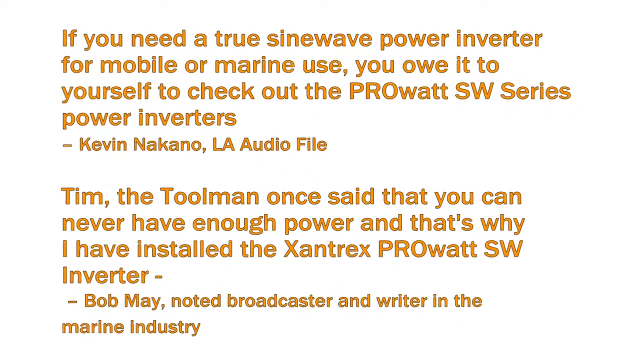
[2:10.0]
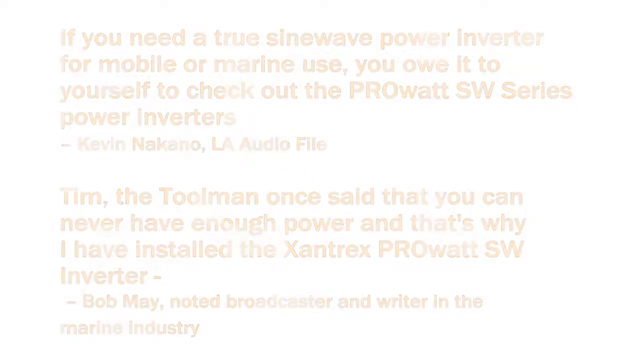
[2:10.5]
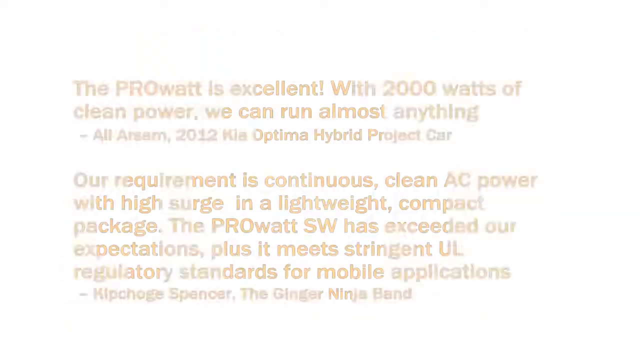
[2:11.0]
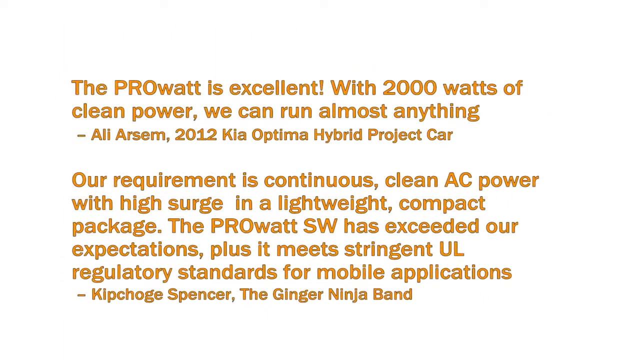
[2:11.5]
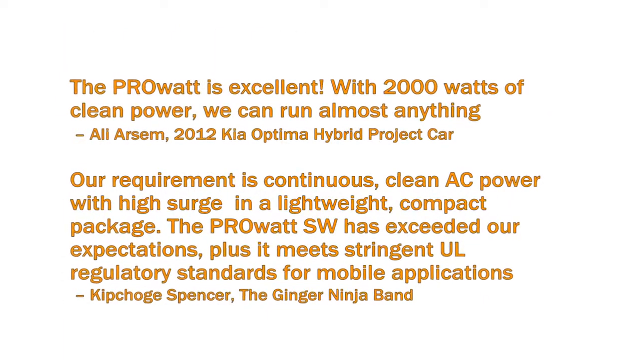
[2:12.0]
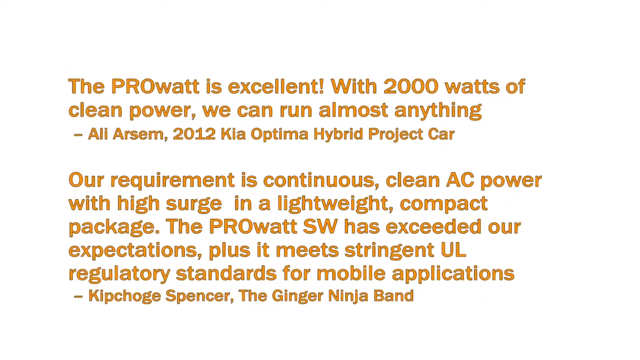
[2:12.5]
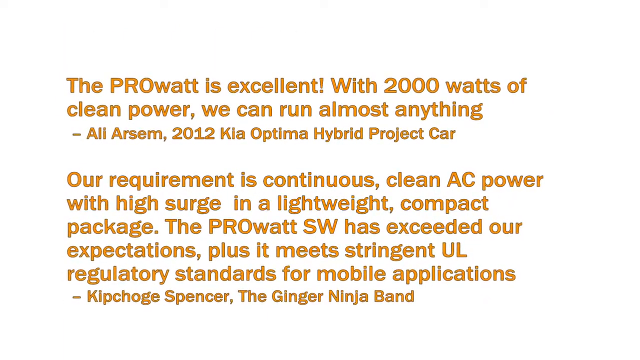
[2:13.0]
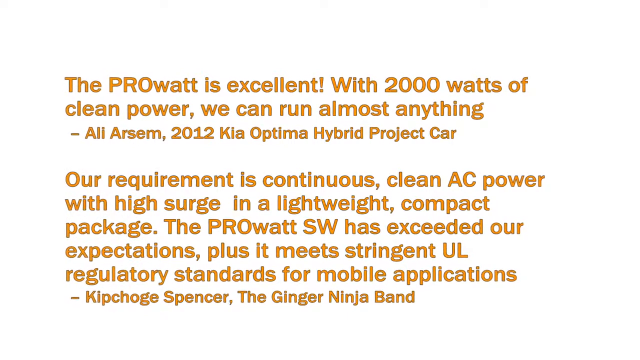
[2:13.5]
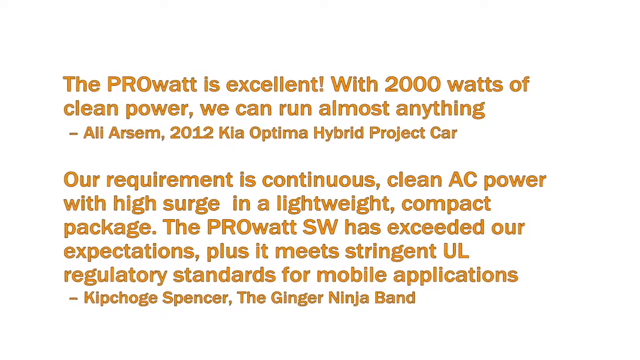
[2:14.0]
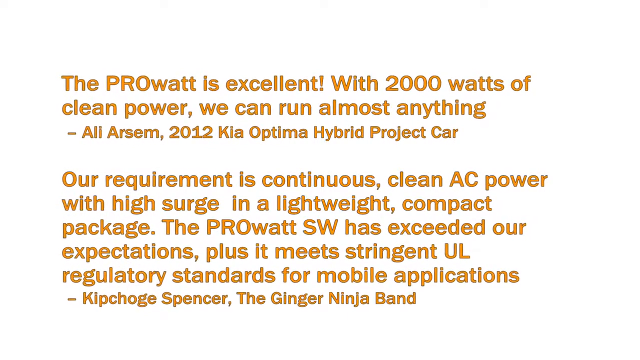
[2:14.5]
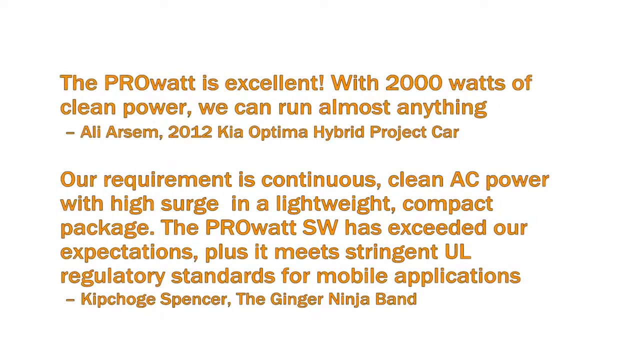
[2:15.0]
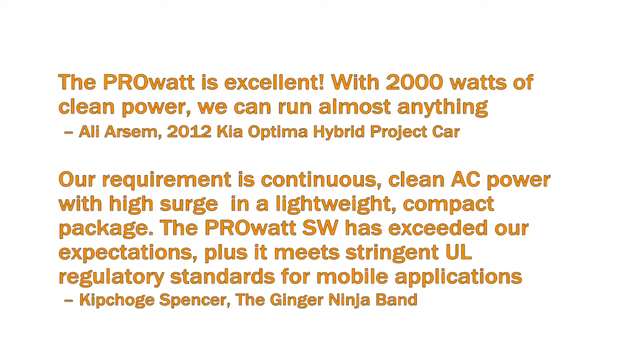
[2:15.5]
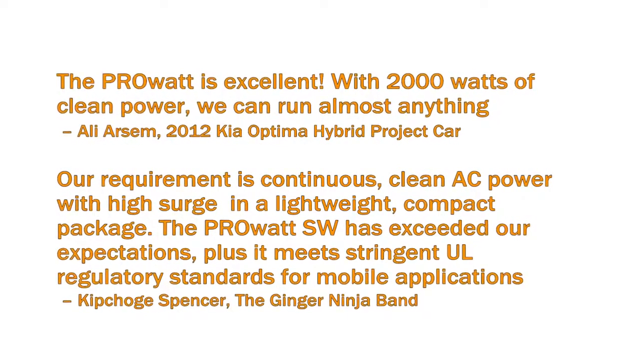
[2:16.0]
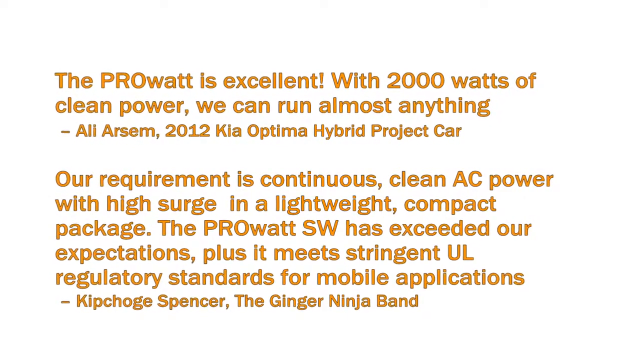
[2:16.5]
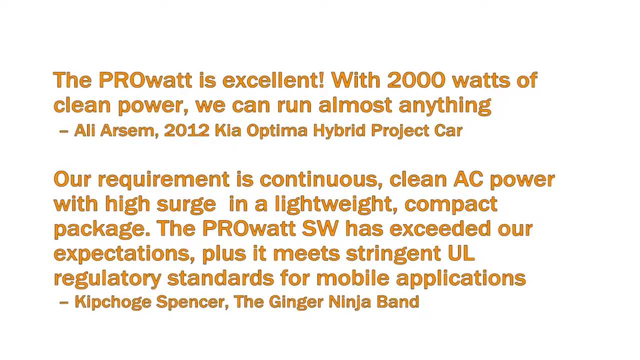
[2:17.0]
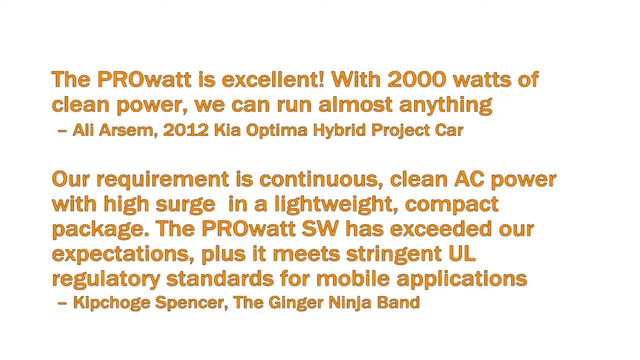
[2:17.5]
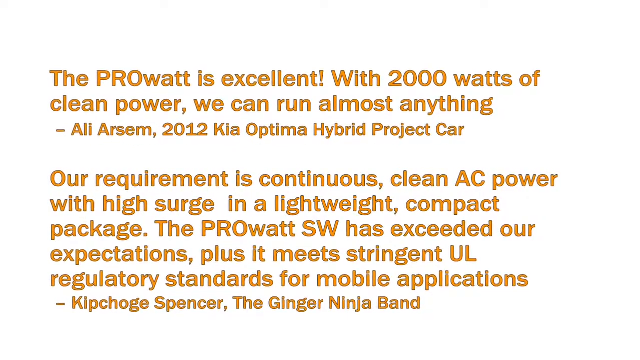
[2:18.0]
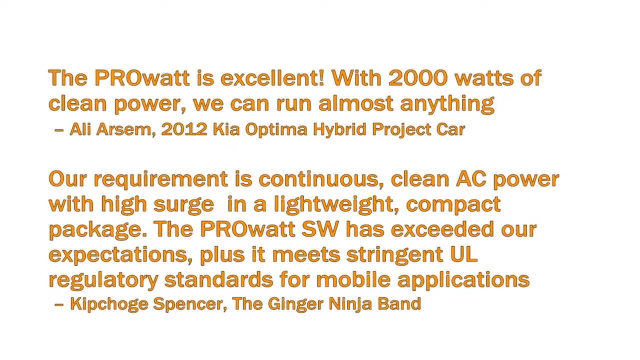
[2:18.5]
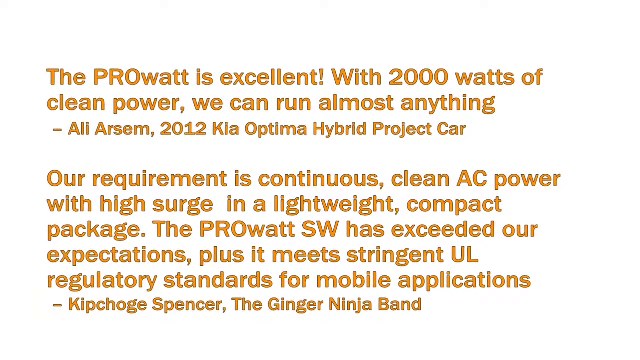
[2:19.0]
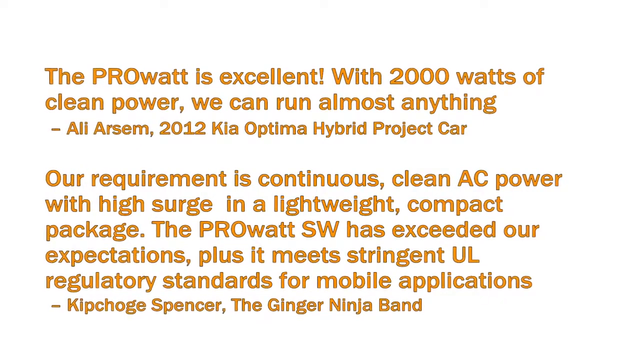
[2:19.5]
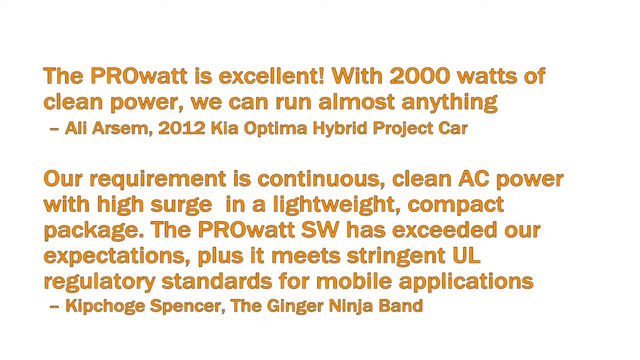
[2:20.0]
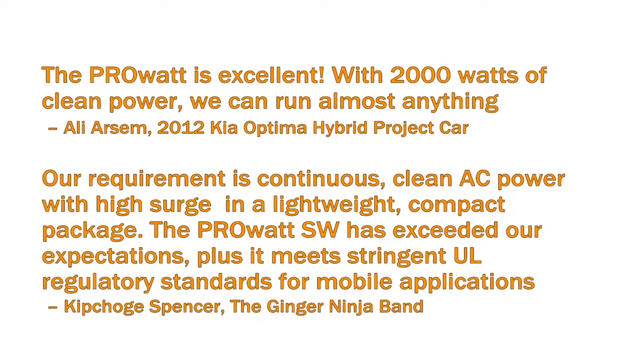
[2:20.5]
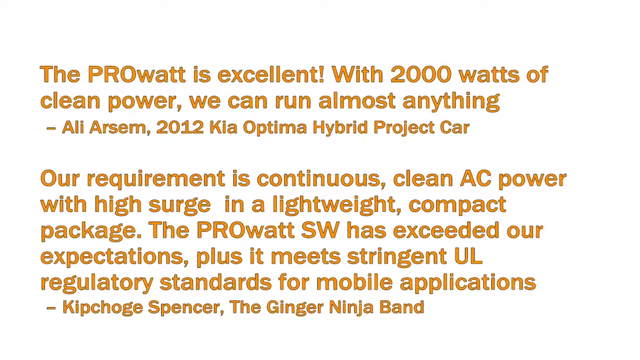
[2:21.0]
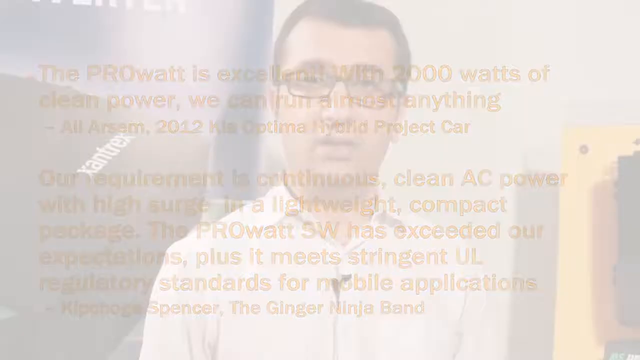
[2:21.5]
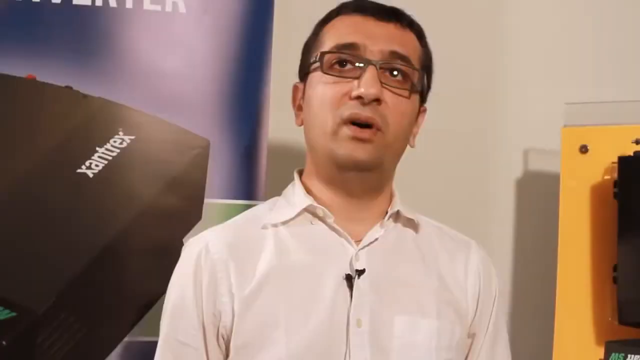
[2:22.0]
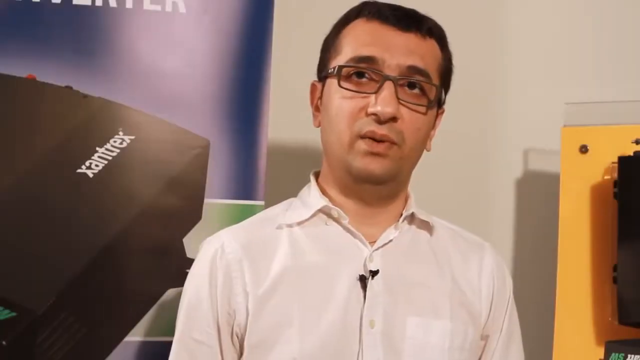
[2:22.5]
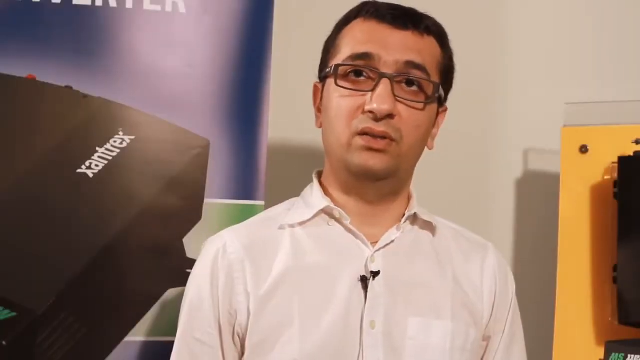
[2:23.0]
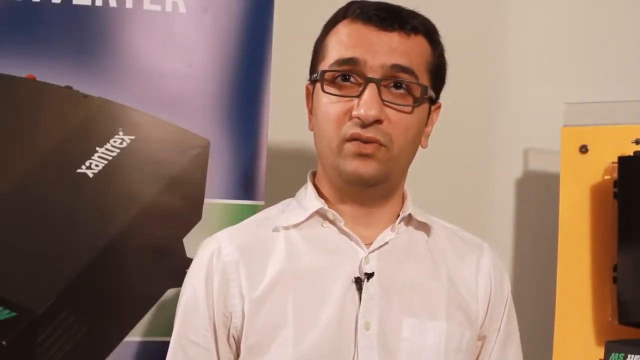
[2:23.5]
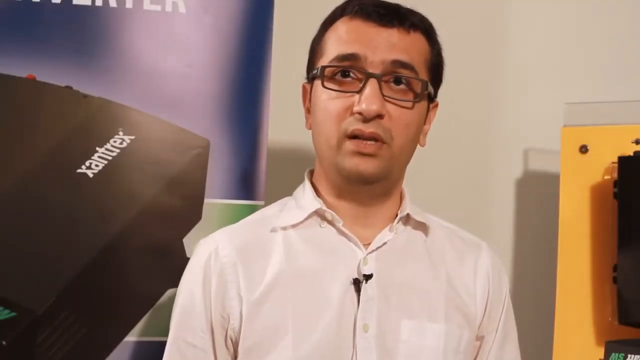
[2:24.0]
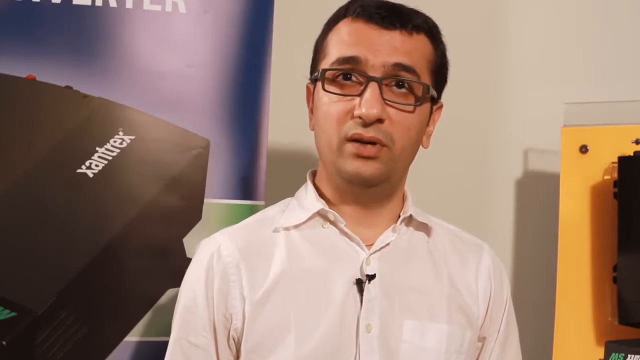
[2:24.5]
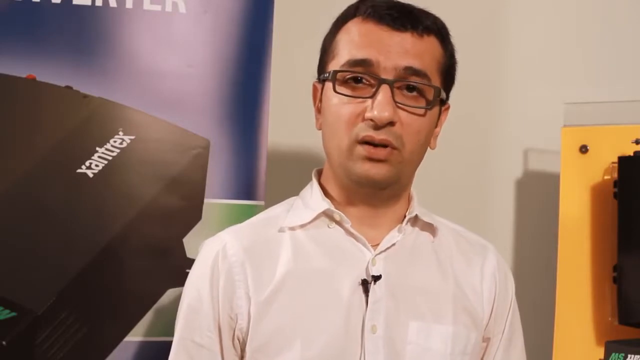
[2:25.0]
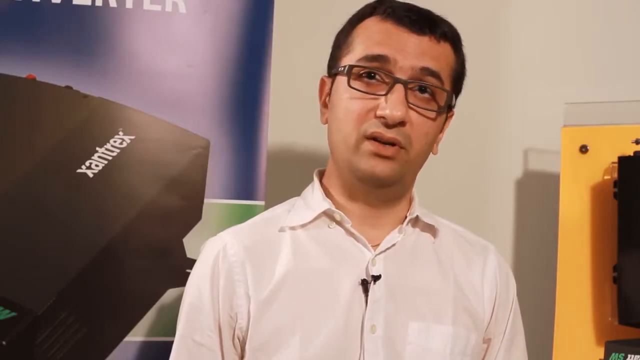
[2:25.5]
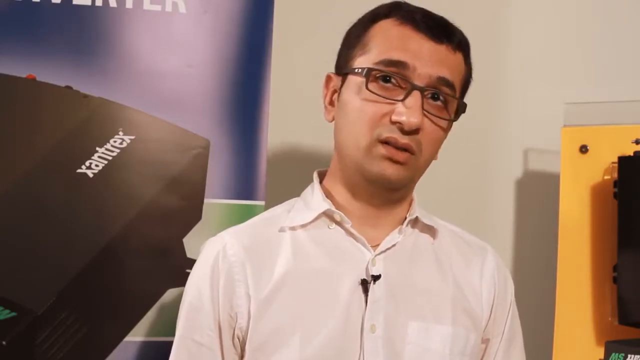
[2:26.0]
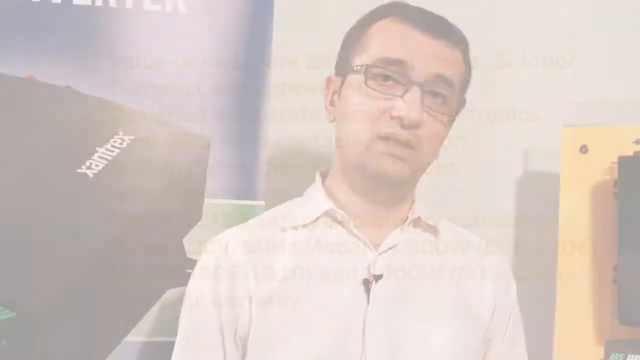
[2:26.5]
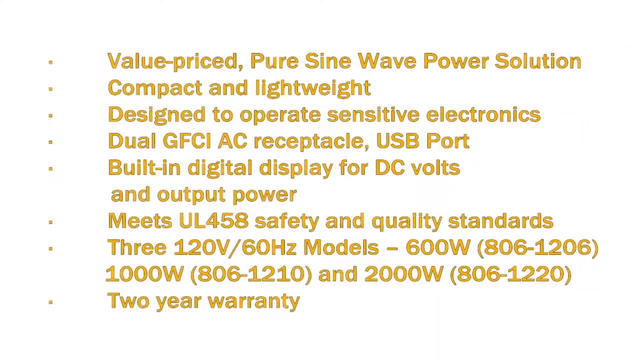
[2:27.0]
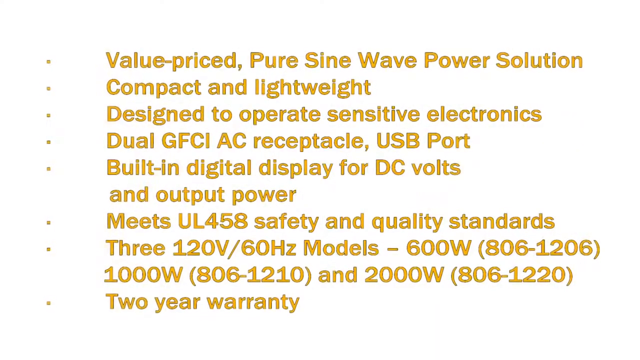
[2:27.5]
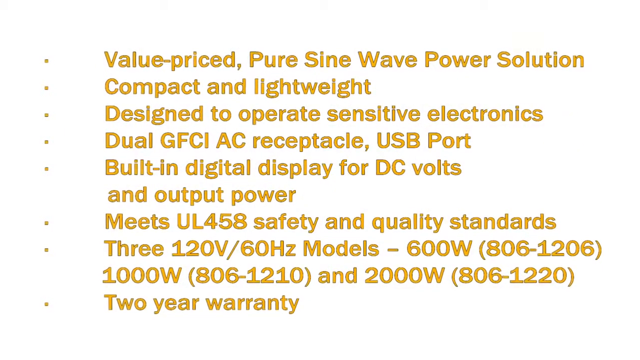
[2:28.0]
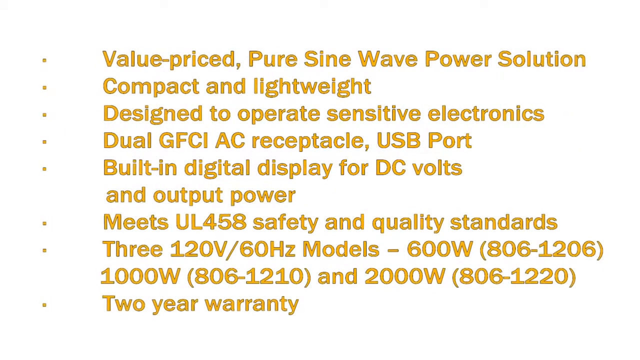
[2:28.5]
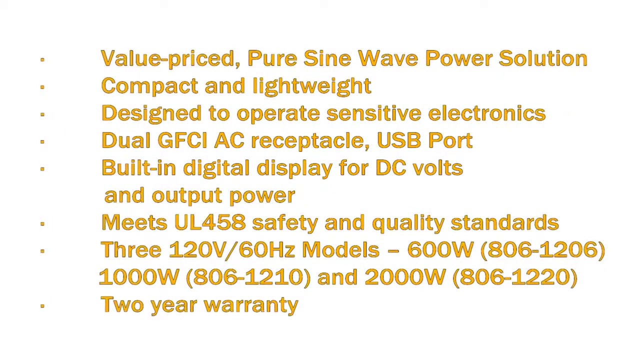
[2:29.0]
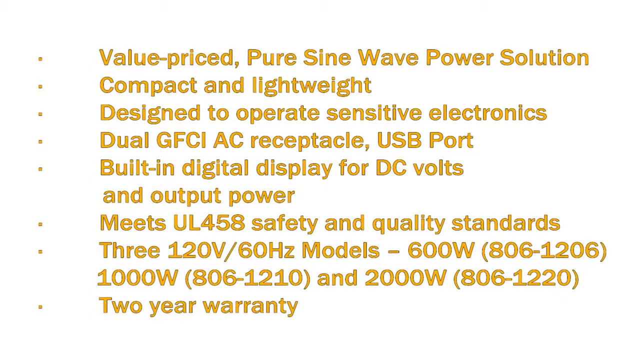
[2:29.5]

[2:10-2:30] Two people's promotions of the product appear: Kevin Nakano and Bob May. Kevin Nakano says "if you need a true sine wave power inverter for mobile or marine use you owe it to yourself to check out the ProWatt SW series power inverters," and Bob May says "Tim the tool man once said that you can never have enough power and that's why I have installed the Xantrex ProWatt SW Inverter." The next screen shows two more people promoting the product: Ali Arsim and, below that, Kirchhoge Spencer. Ali says "the ProWatt is excellent. With 2,000 watts of clean power, we can run almost anything." Below that, the Ginger Ninja Band member says "our requirement is continuous clean AC power with huge surge in a lightweight compact package. The ProWatt SW meets our expectations, plus it meets stringent UL regulatory standards for mobile applications." The man then comes back on and talks to the camera.